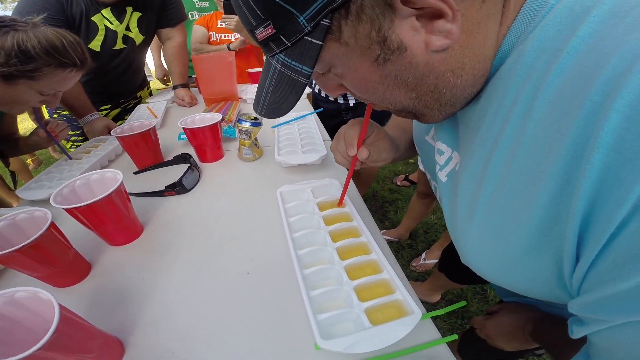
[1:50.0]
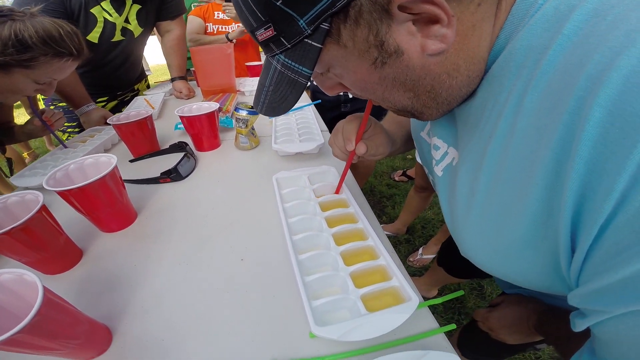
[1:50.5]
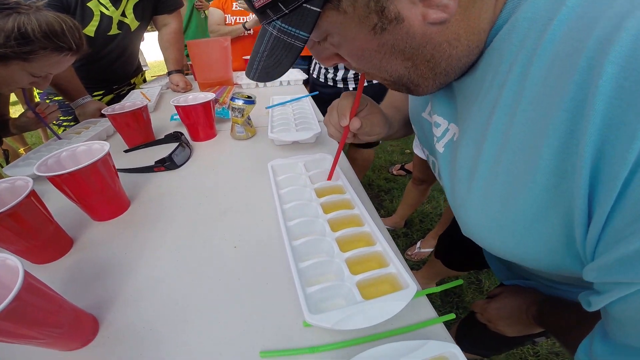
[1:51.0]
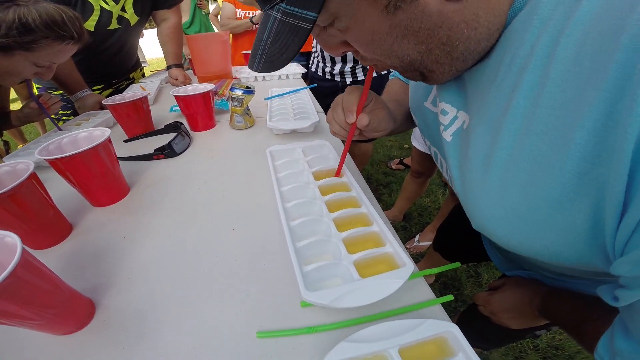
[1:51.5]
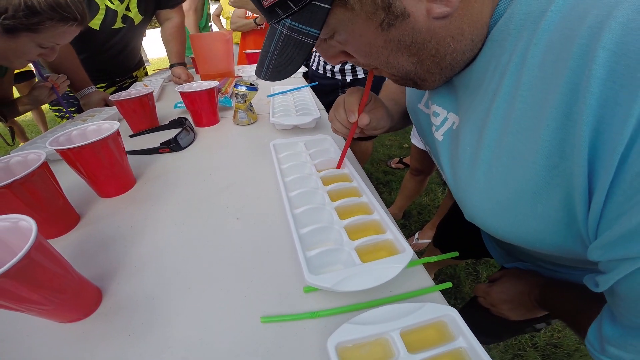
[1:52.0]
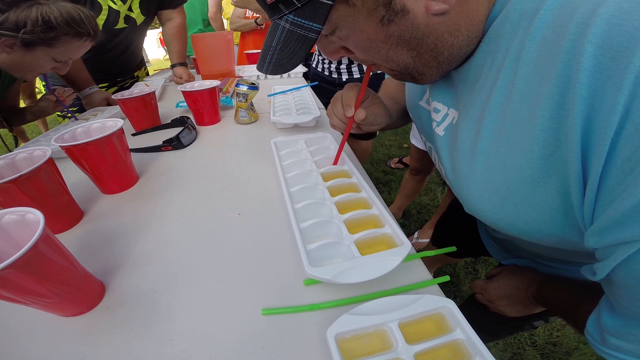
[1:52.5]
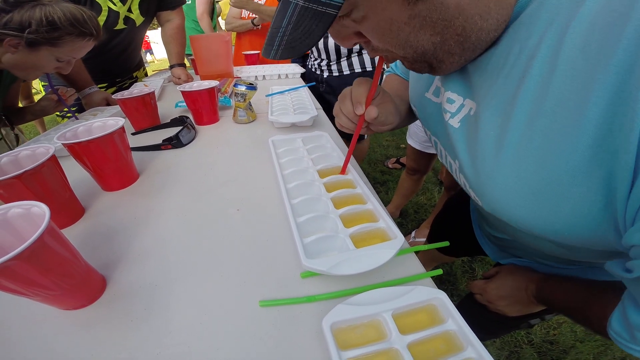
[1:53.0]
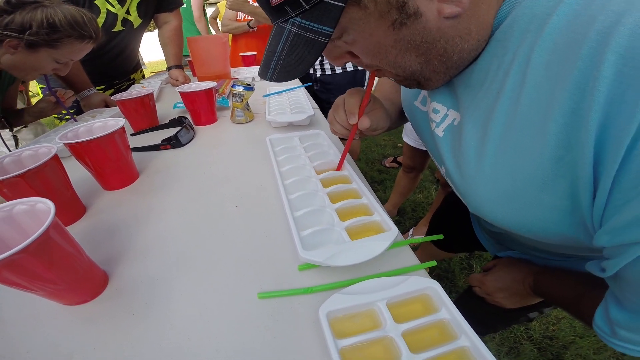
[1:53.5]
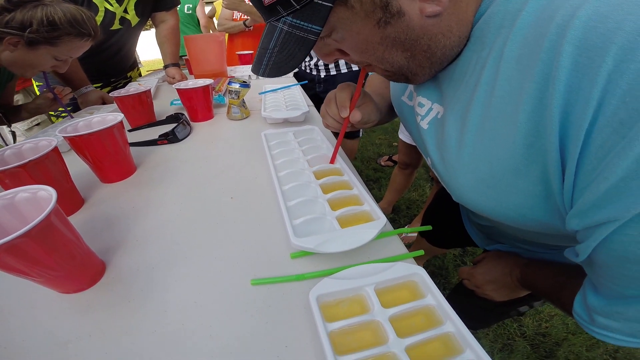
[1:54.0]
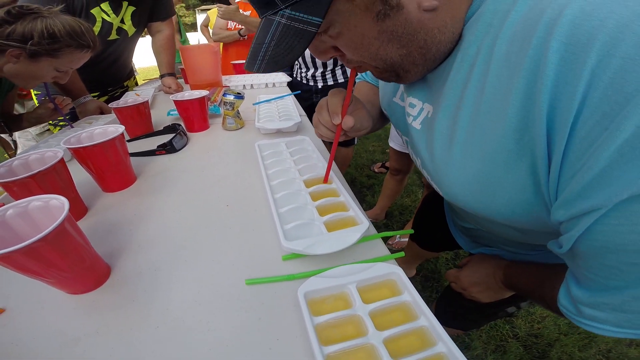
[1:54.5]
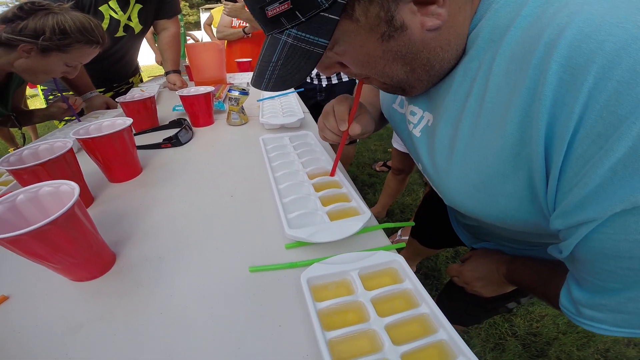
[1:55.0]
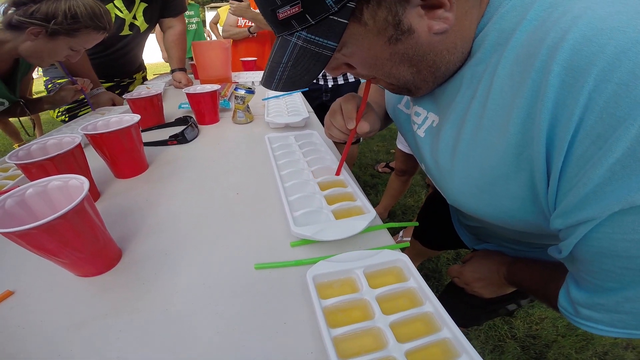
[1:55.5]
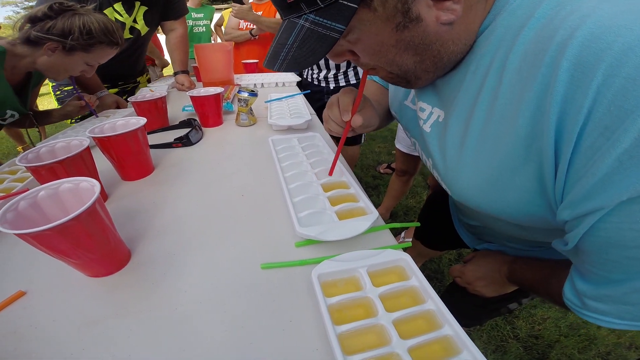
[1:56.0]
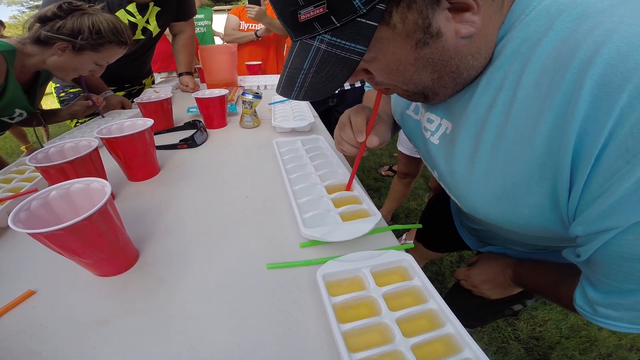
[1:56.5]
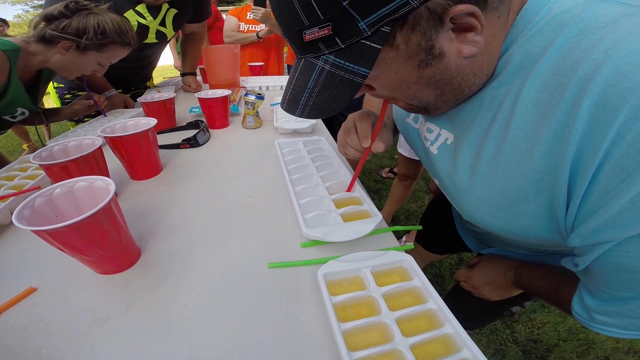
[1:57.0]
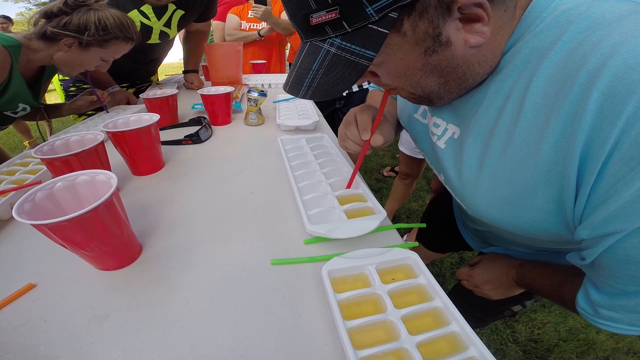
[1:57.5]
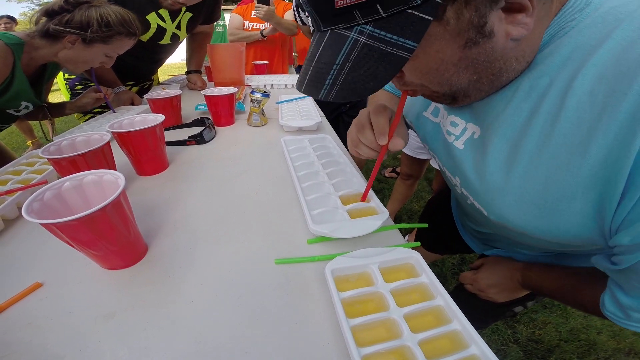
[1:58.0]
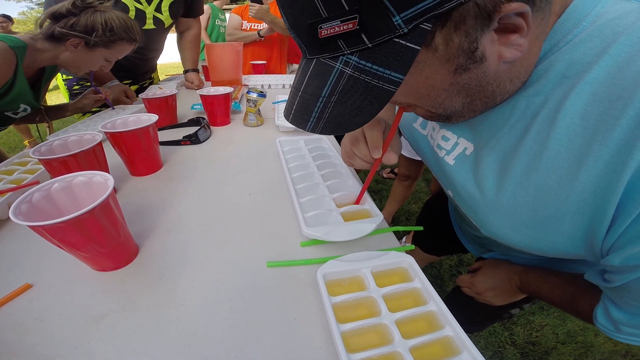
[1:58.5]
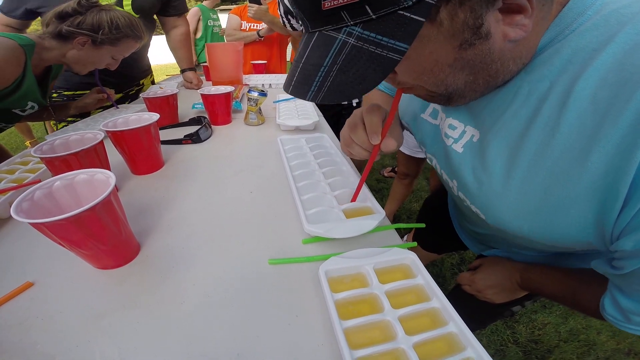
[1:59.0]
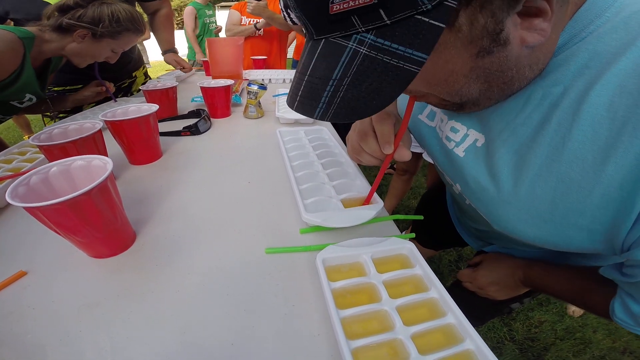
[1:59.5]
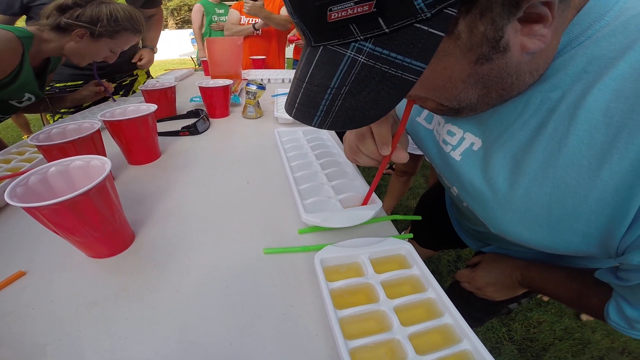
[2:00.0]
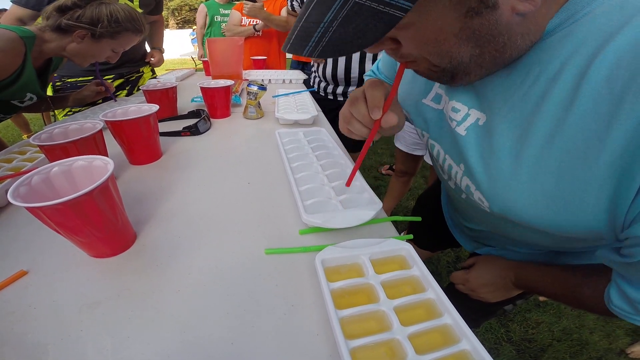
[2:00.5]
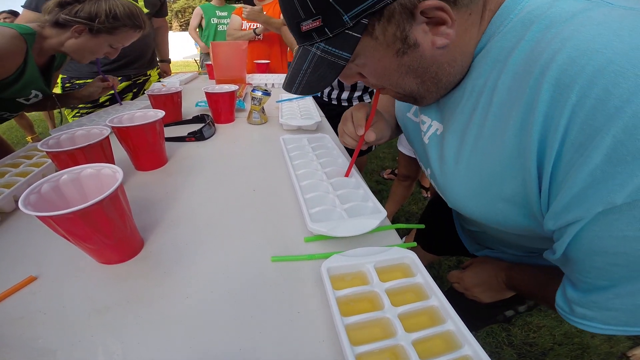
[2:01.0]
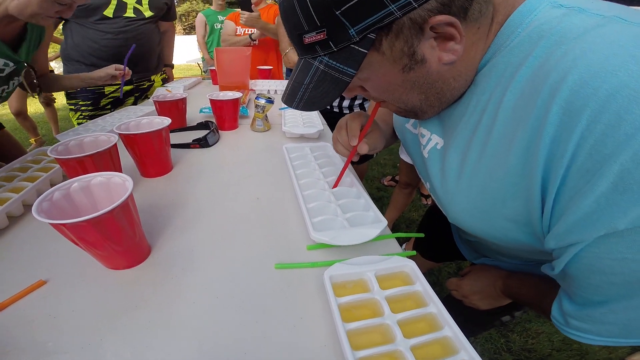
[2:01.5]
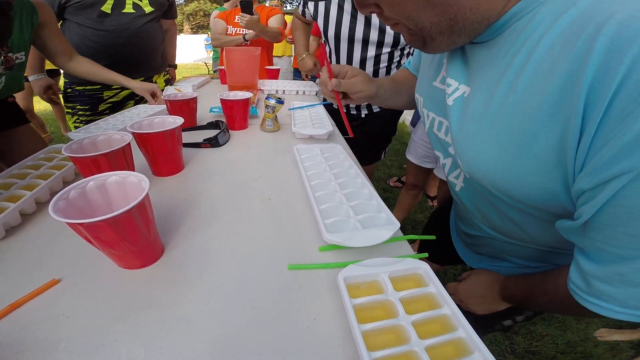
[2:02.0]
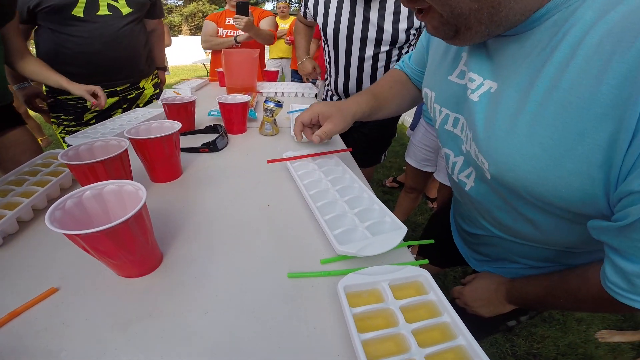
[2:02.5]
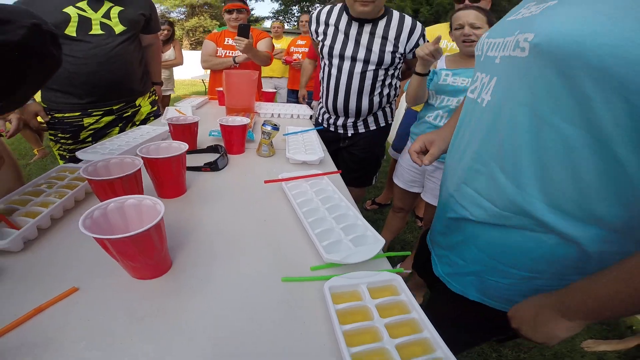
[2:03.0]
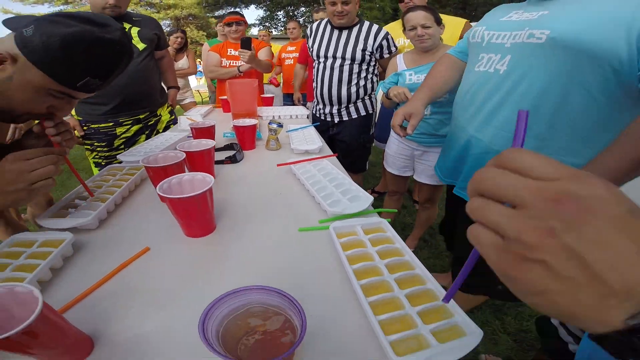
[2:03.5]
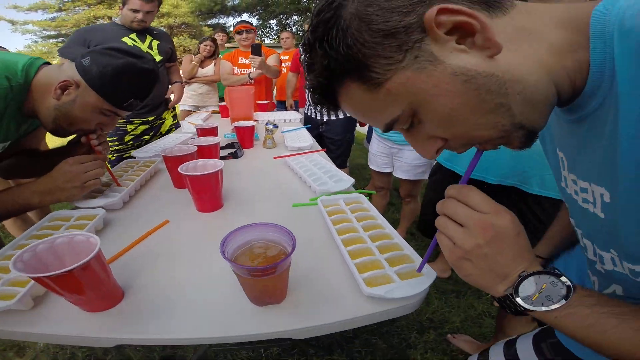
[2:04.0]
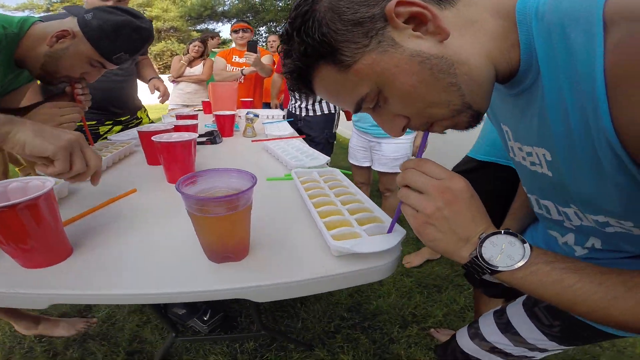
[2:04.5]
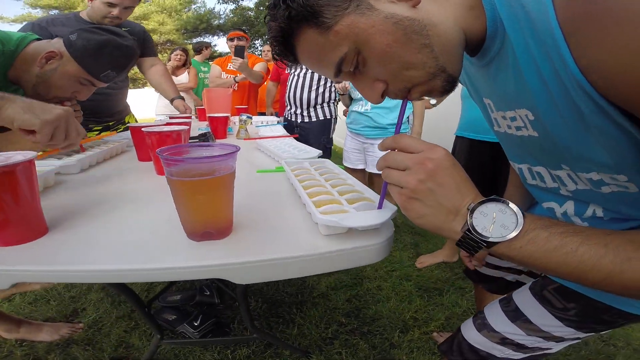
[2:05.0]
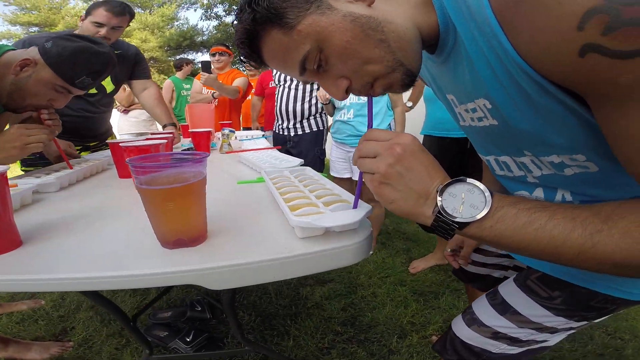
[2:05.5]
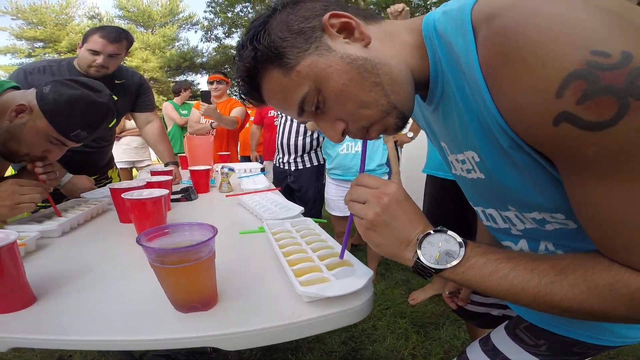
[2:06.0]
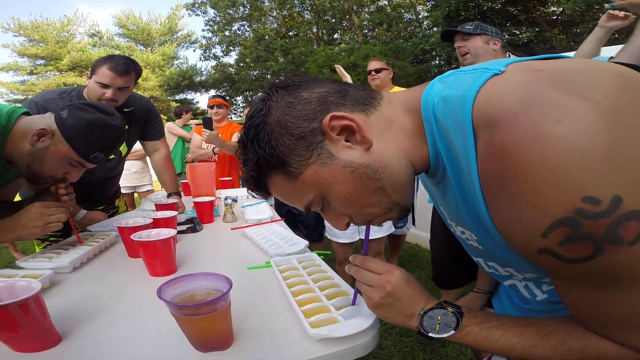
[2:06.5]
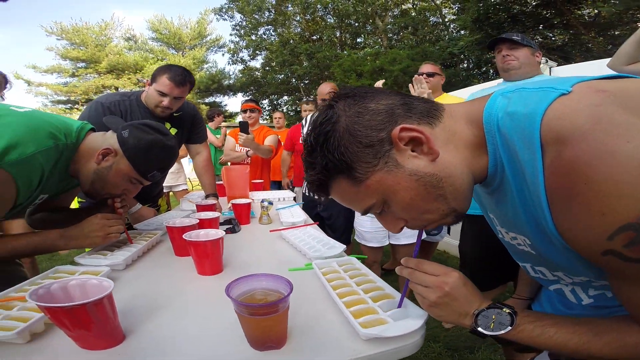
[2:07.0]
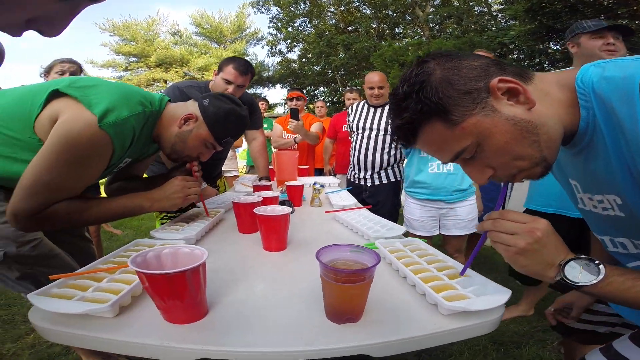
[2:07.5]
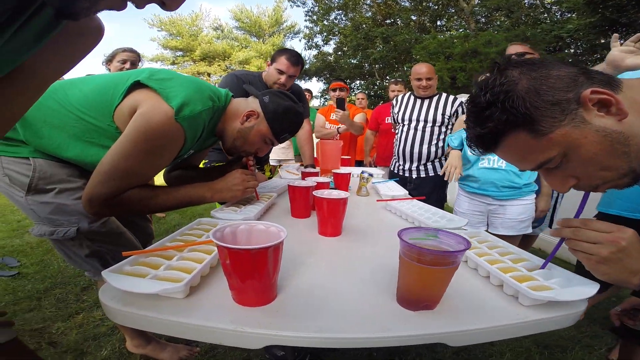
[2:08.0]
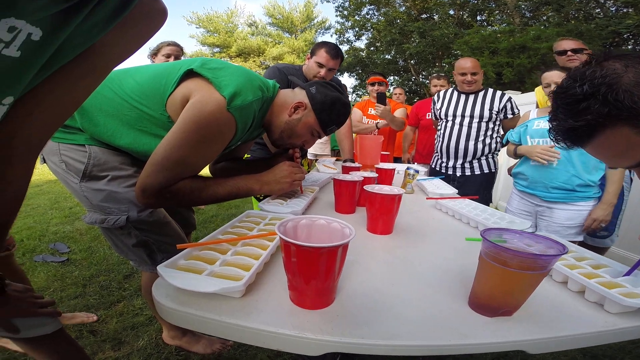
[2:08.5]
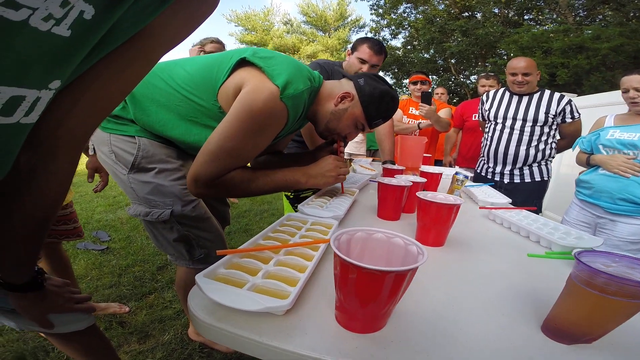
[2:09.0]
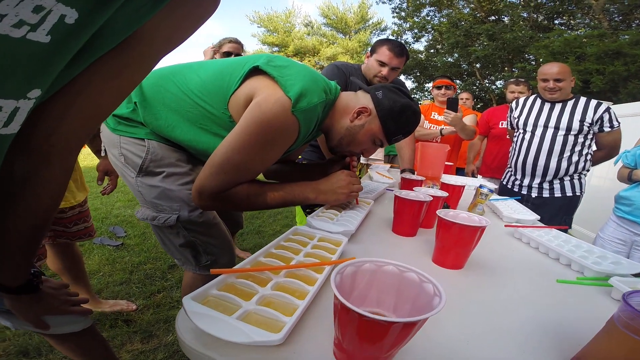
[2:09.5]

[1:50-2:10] The focus is first on a close-up of the heavyset man in the dark tartan baseball cap on the light blue team, leaning over with his red straw and finishing the very last sections of his beer. He lays his red straw across the white ice cube tray and stands up. His teammate to his left, the last participant on the light blue team, takes over: a younger man, maybe 30, with a purple straw, short dark hair, a tattoo on his left shoulder and some scruff around his face. The camera then shifts to the green team on the other side of the table, where the active participant, across from the heavyset man, is a younger, pretty big Caucasian guy of about 30 in a dark baseball cap that looks like it is on backwards. He leans over with his red straw, moving pretty quickly to catch up. There are a handful of red solo cups on the table, probably five or six, and at the very front edge of the table is a clear plastic cup filled almost to the top, presumably with beer.